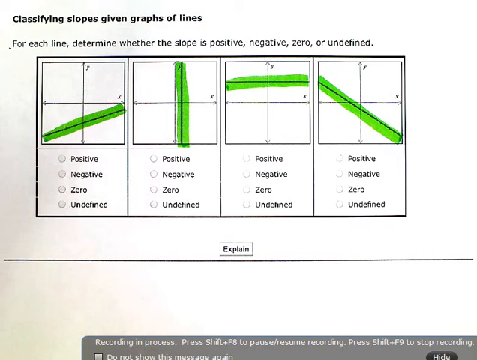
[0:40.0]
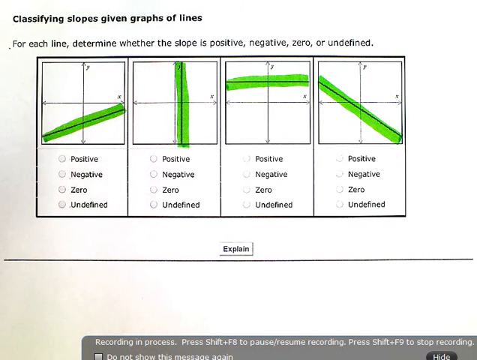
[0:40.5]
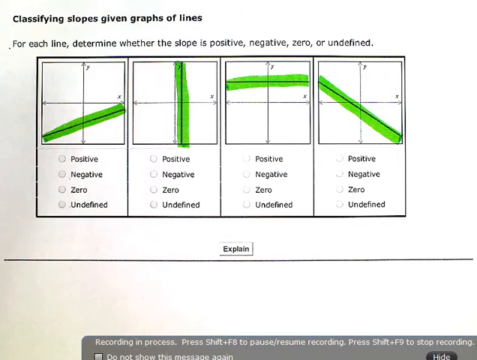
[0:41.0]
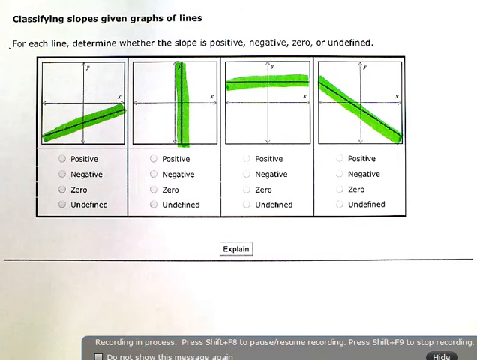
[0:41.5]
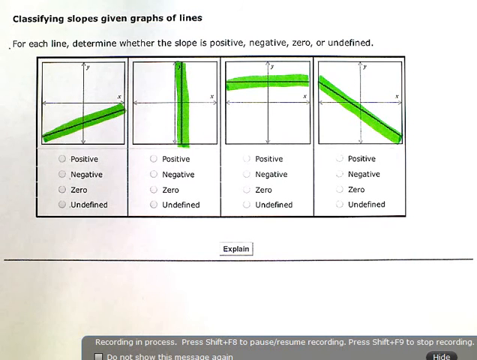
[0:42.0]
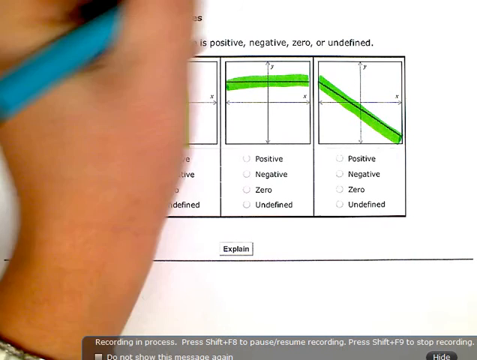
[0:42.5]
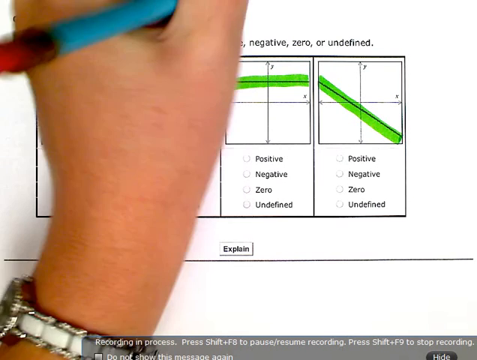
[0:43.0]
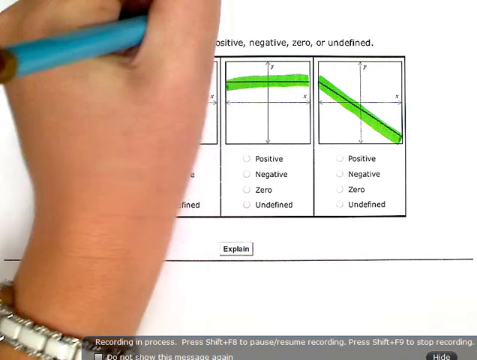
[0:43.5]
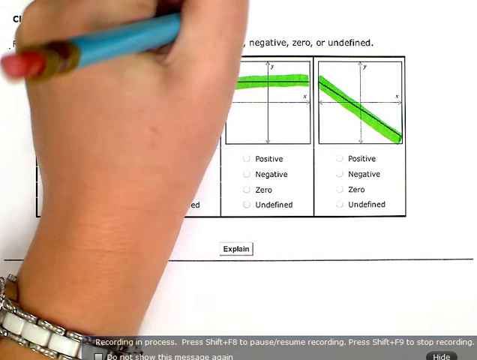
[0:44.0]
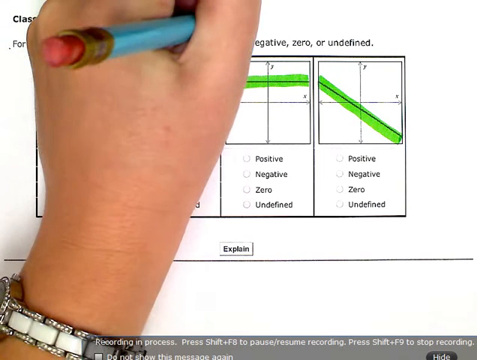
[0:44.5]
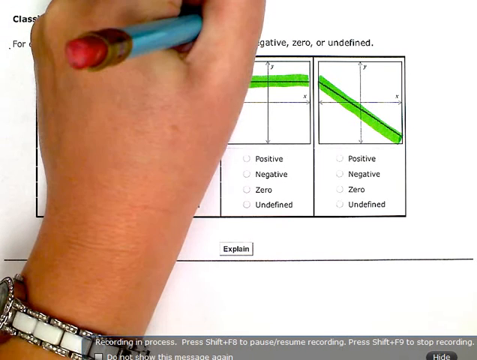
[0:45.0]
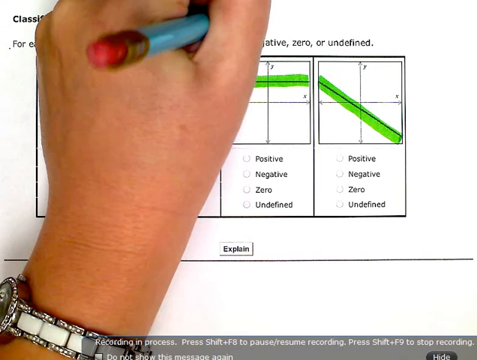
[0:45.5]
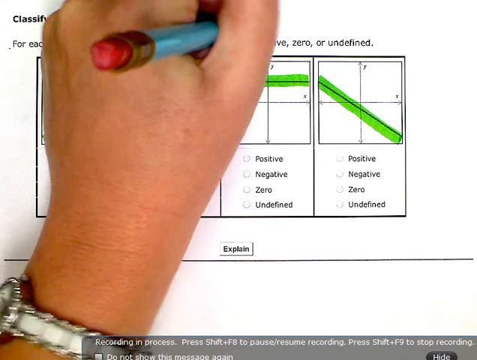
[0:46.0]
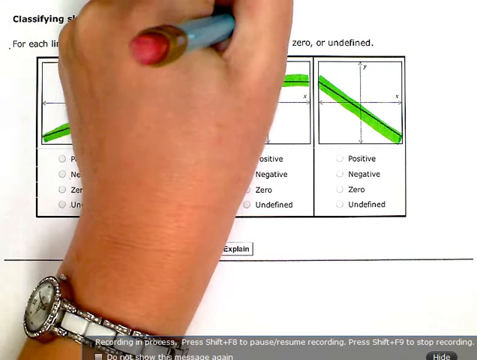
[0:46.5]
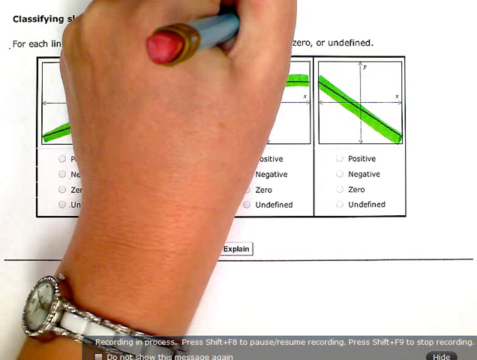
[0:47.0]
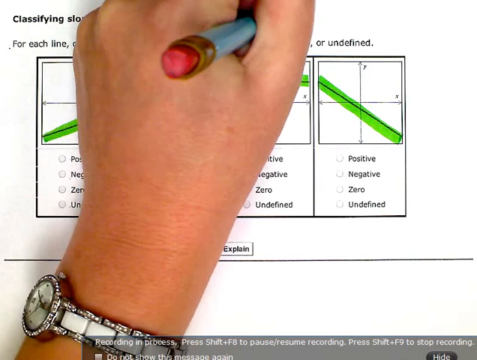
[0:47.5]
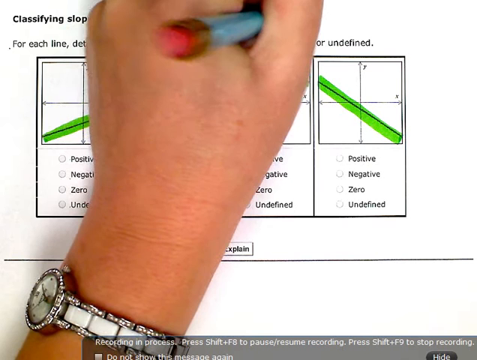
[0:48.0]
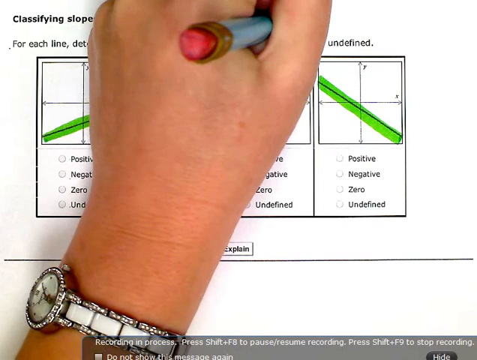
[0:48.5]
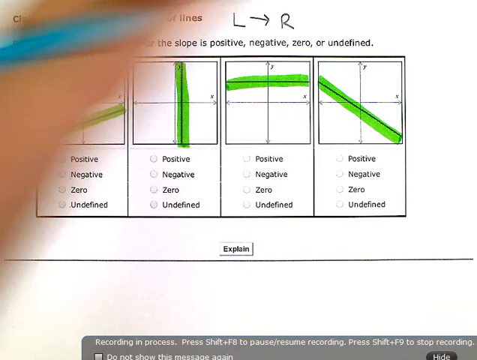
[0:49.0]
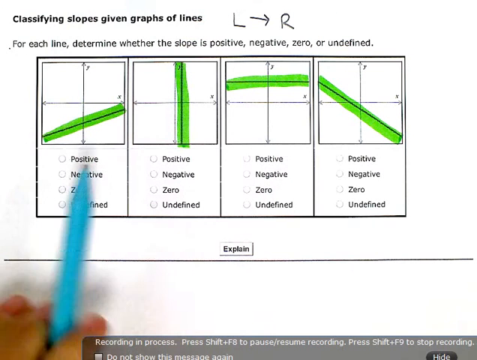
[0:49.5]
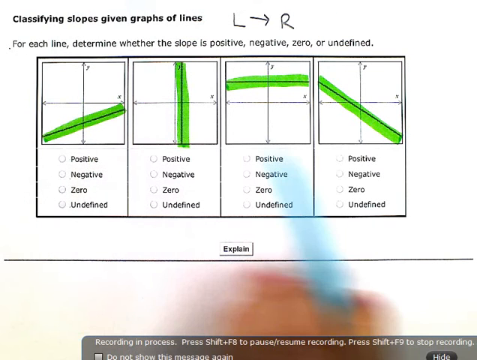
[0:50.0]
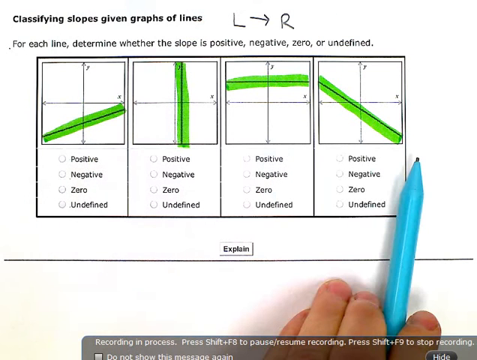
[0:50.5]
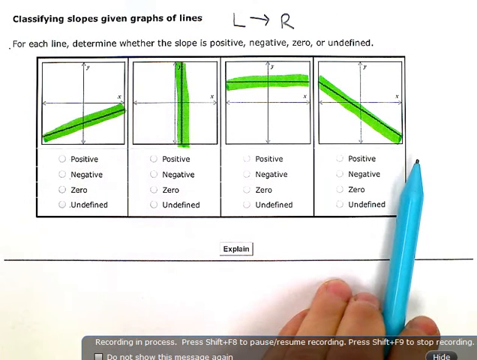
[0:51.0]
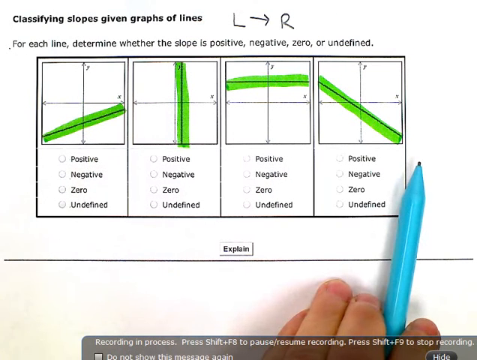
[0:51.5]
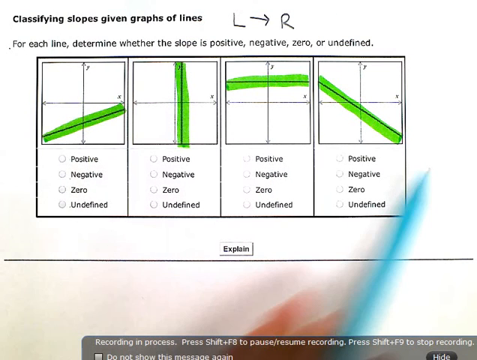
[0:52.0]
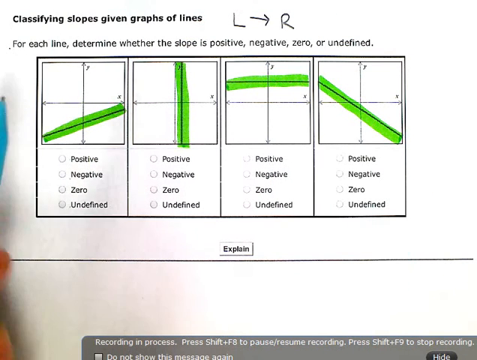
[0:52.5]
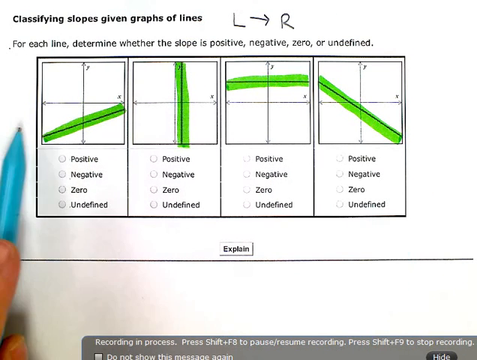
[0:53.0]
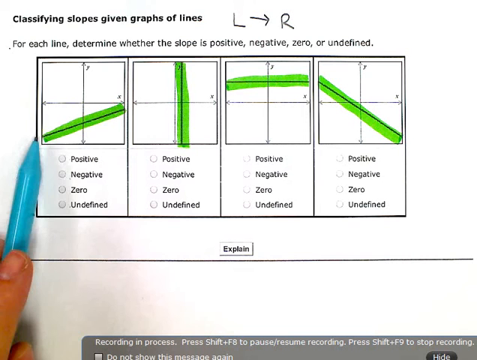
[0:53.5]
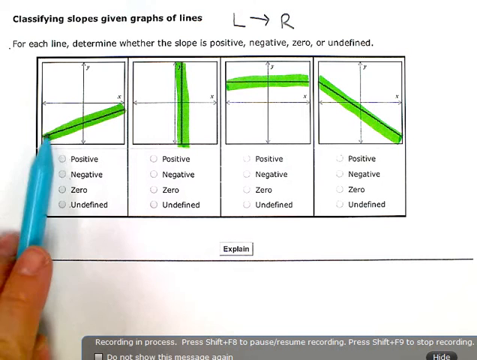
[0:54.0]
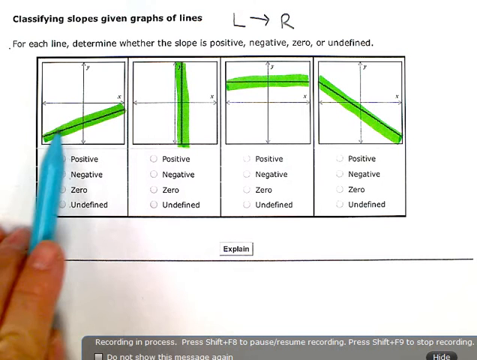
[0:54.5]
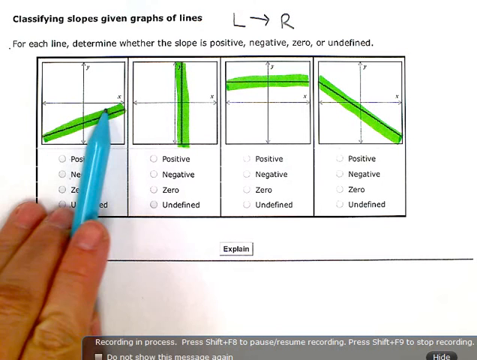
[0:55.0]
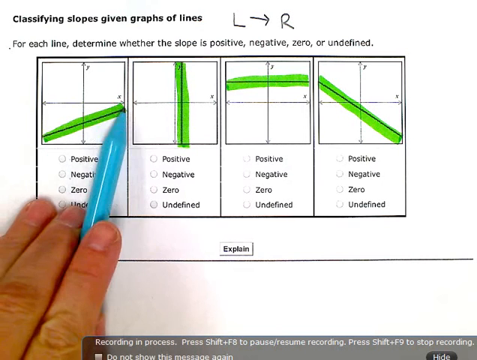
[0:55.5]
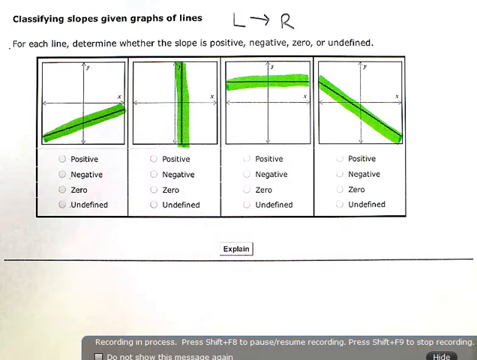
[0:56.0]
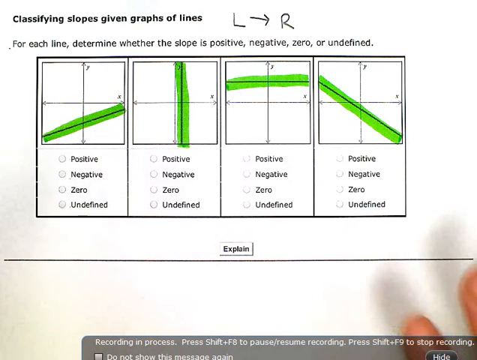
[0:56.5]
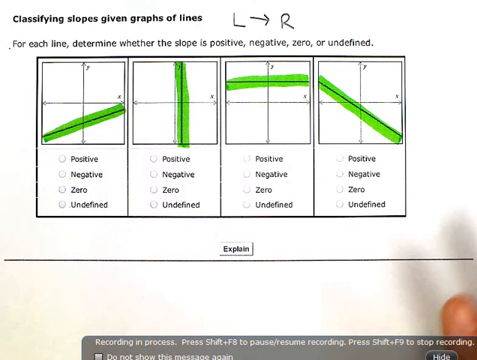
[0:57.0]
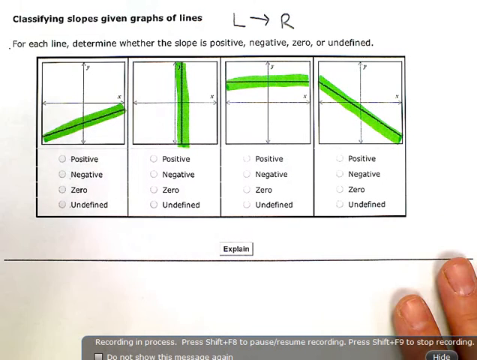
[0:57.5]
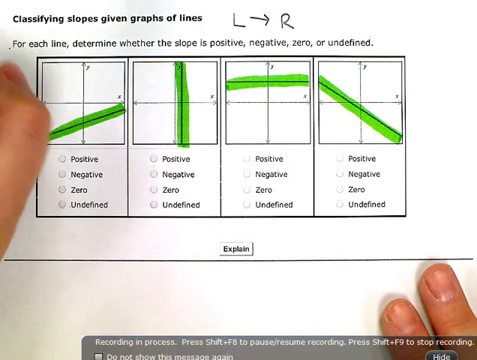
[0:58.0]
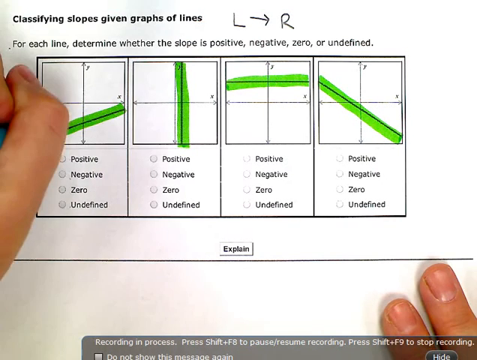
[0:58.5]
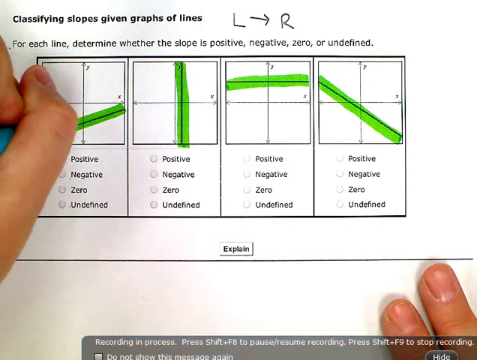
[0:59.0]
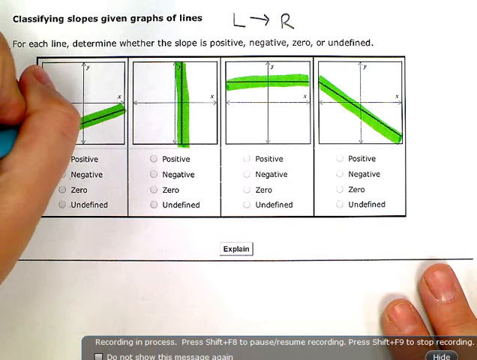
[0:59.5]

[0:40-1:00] The heading on the page says "classifying slopes given graphs of lines", and under it are the words "for each line determine whether the slope is positive, negative, zero, or undefined." Below is a rectangular box divided into four equal sections, each with a four-gridded square containing a line, and underneath each are positive, negative, zero, or undefined, which it seems the person working it out needs to tick. Under the box is the word "explain", which appears to be a tab that can be clicked. A child's left hand holds a pencil with a rubber on the top; the small child appears to be a girl because of a feminine-style watch with diamantés on it. The child has written L, then an arrow pointing to the right, then R, which could possibly mean left to right. She holds a bright blue pencil and traces over the lines, presumably trying to work out the answer.